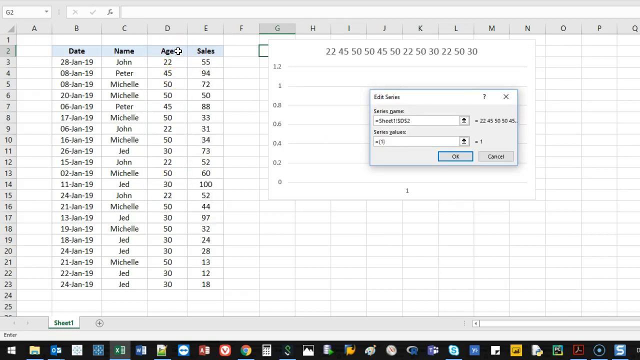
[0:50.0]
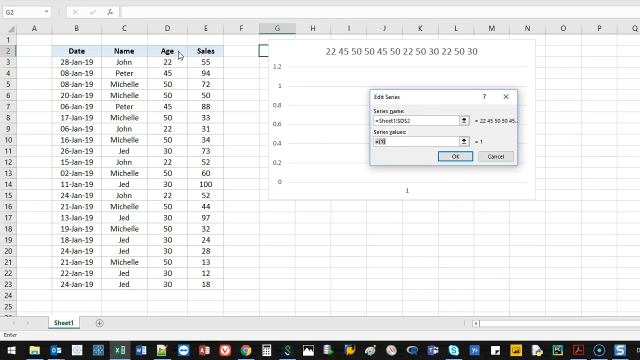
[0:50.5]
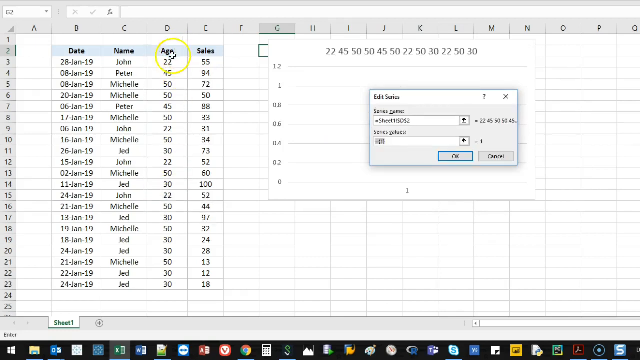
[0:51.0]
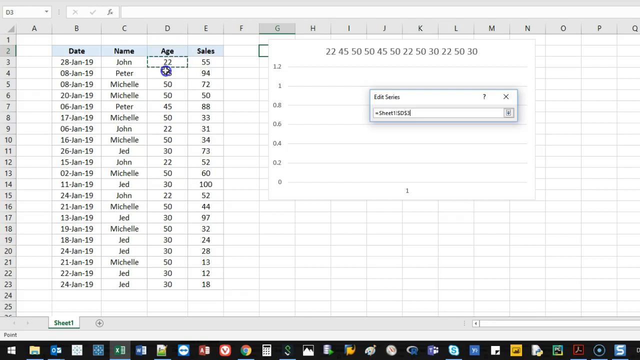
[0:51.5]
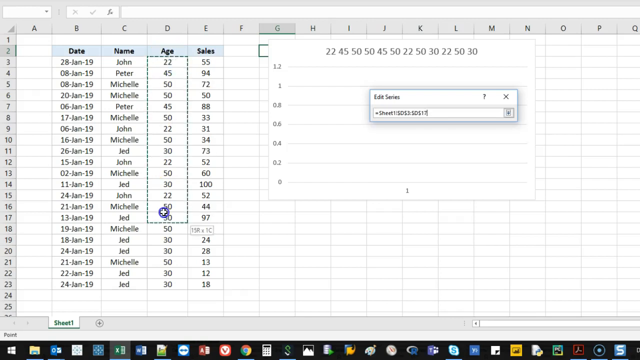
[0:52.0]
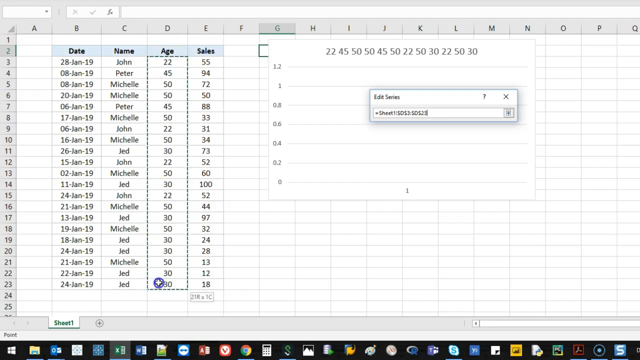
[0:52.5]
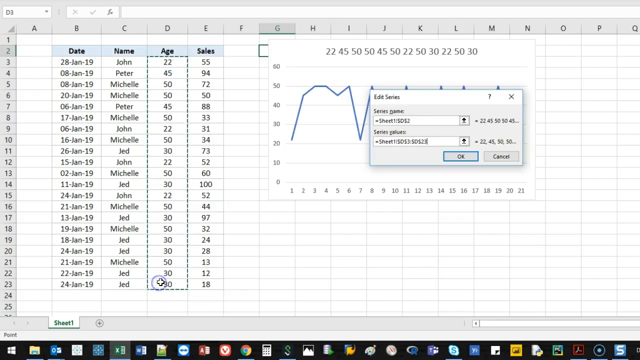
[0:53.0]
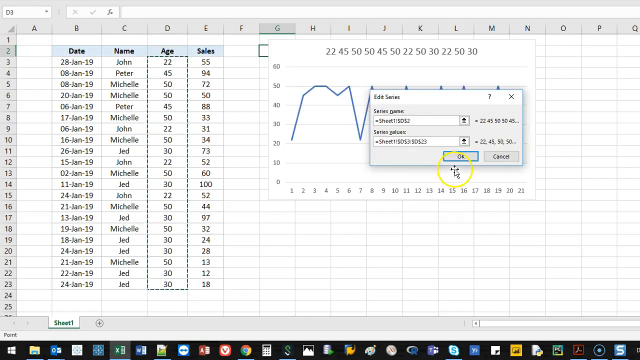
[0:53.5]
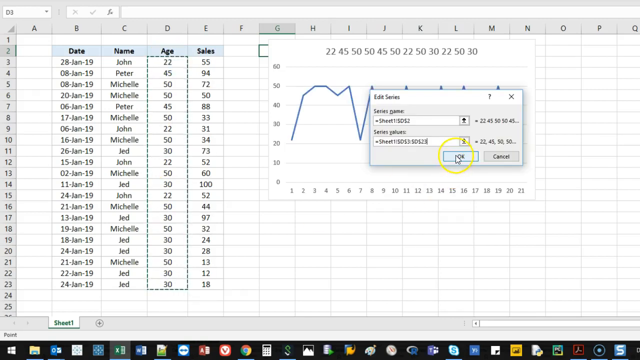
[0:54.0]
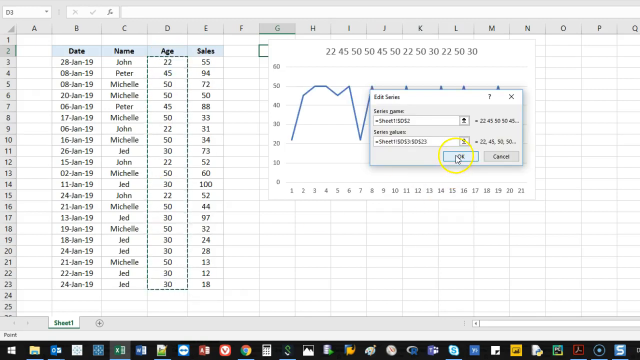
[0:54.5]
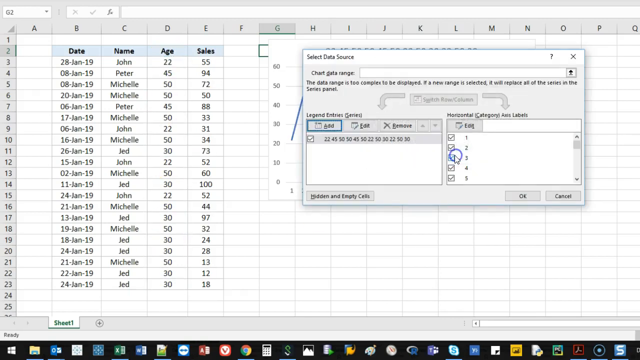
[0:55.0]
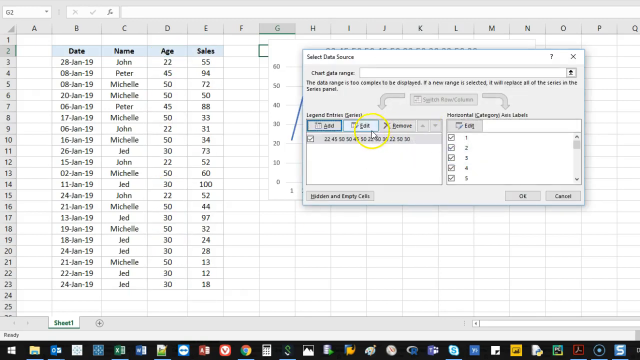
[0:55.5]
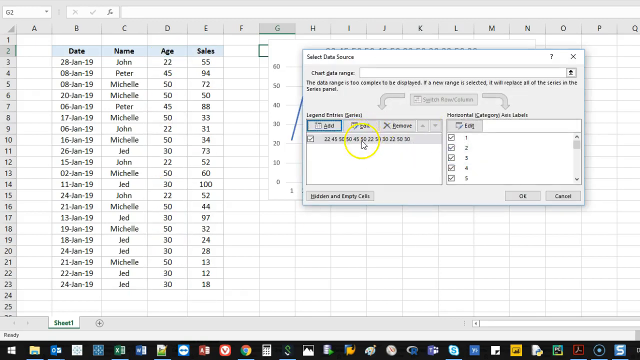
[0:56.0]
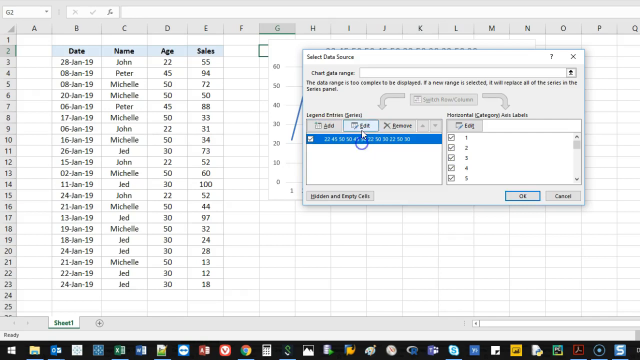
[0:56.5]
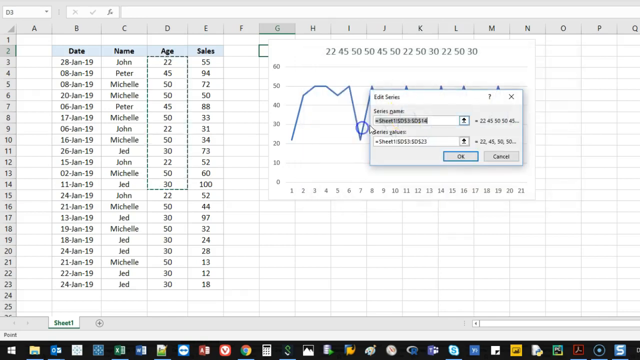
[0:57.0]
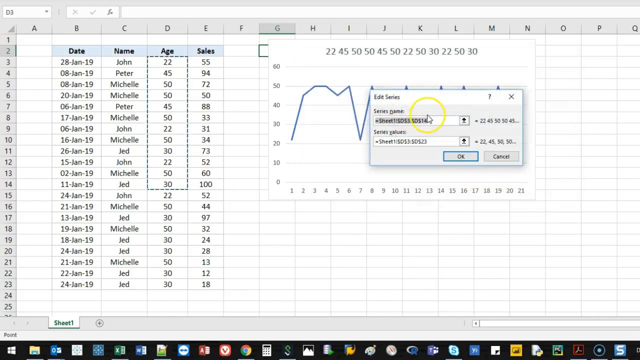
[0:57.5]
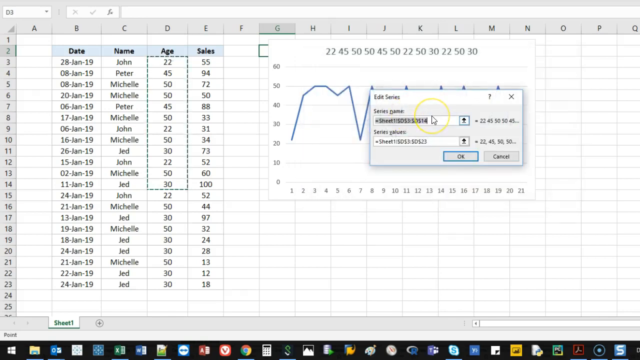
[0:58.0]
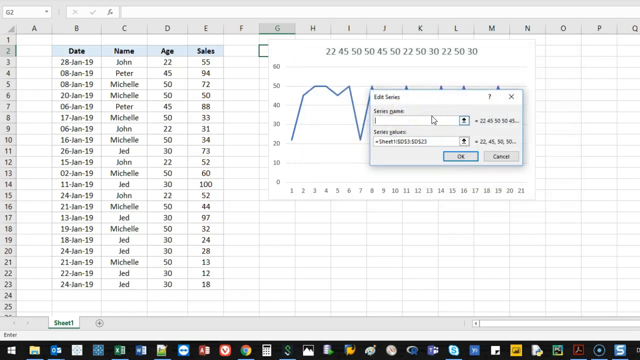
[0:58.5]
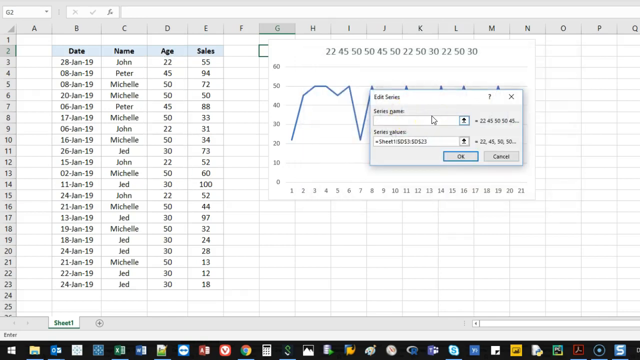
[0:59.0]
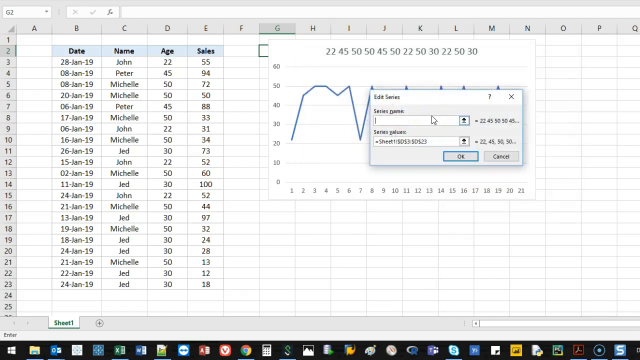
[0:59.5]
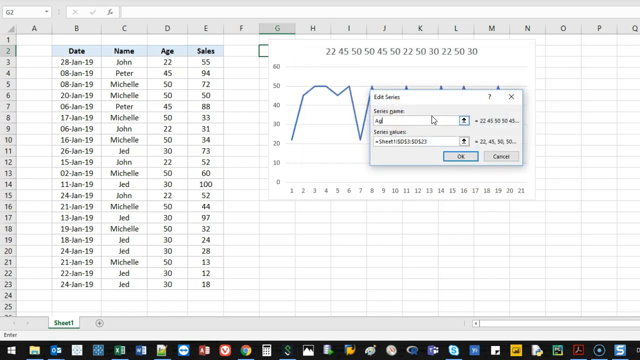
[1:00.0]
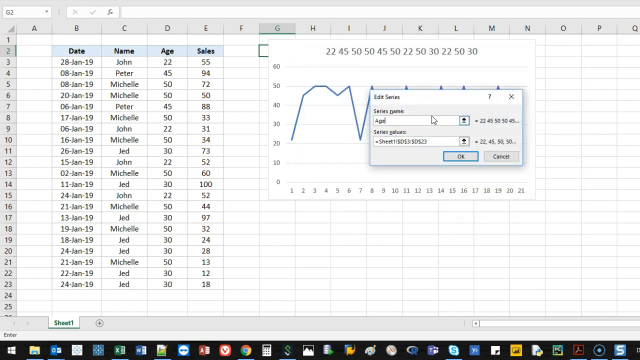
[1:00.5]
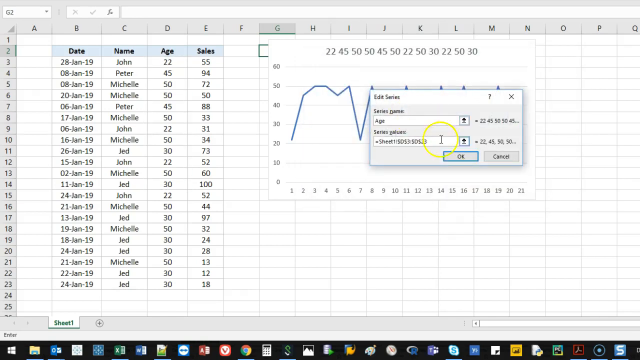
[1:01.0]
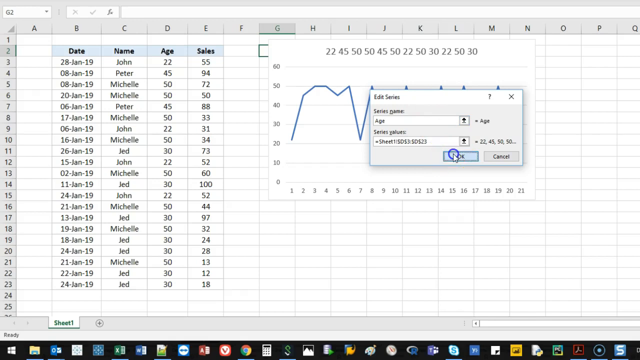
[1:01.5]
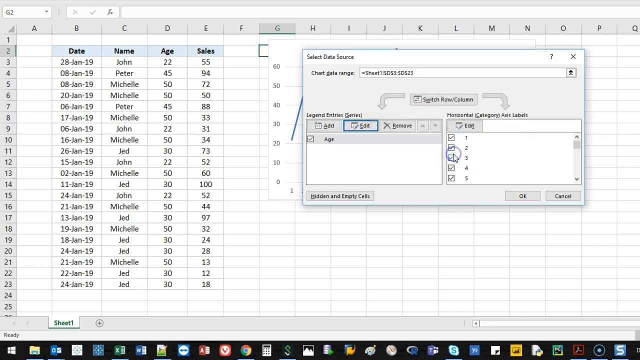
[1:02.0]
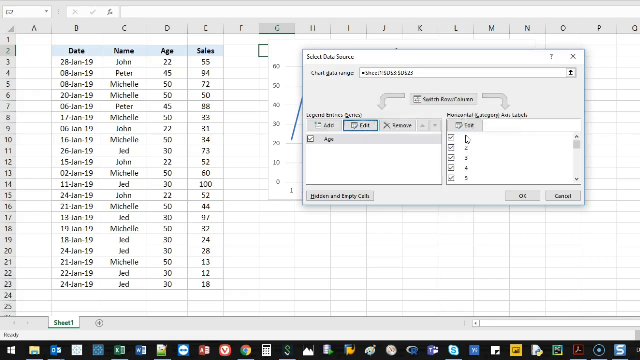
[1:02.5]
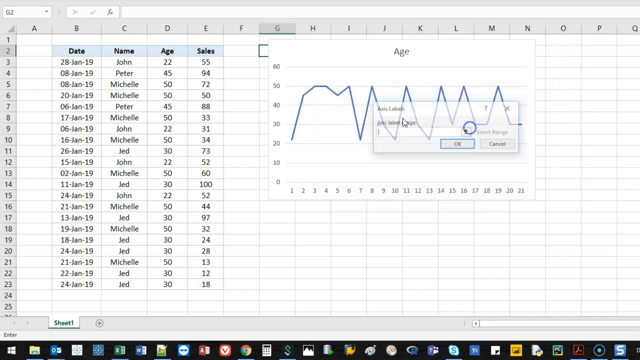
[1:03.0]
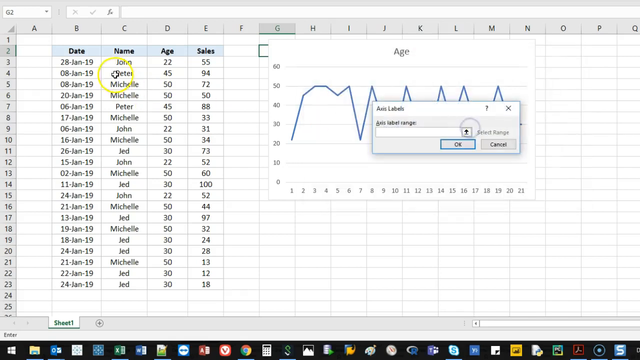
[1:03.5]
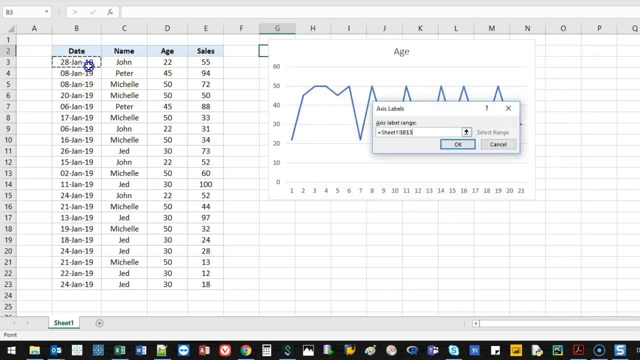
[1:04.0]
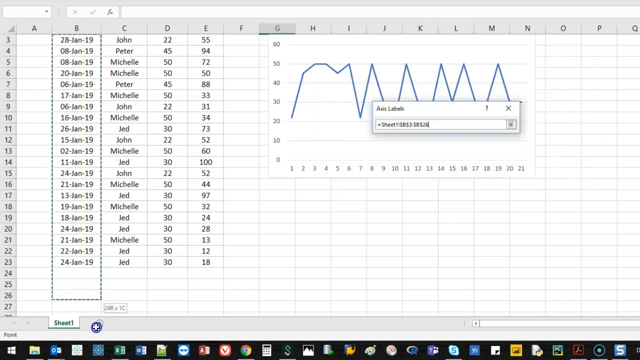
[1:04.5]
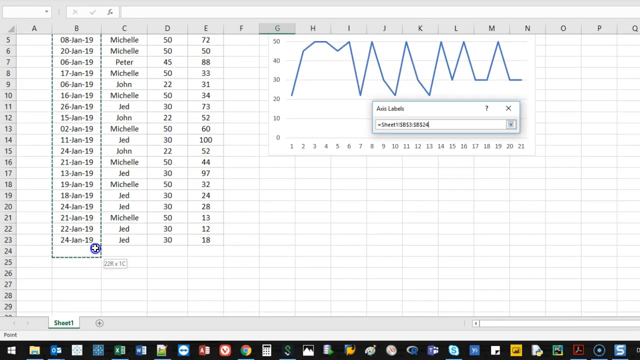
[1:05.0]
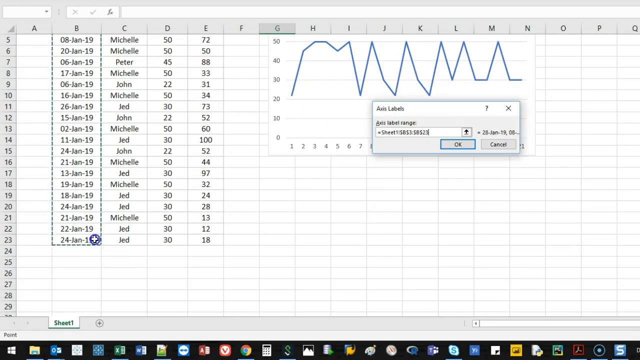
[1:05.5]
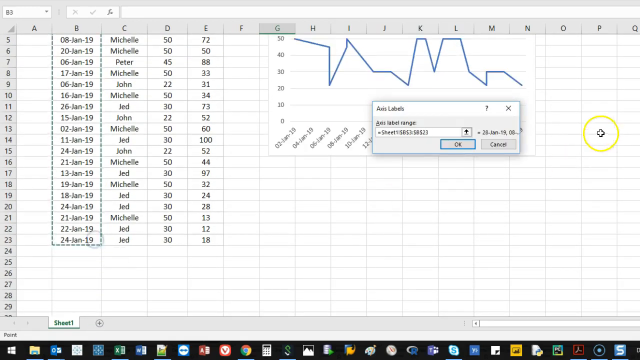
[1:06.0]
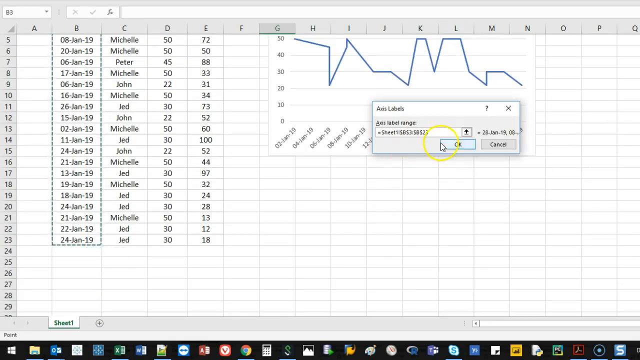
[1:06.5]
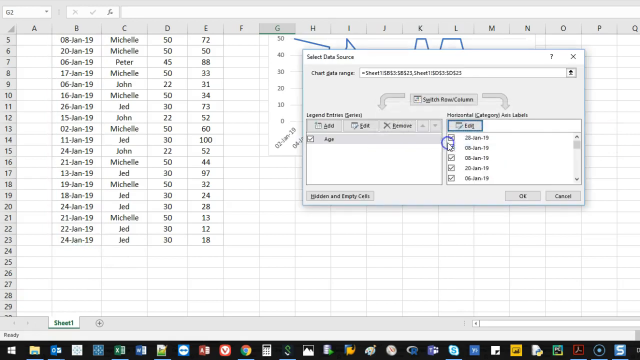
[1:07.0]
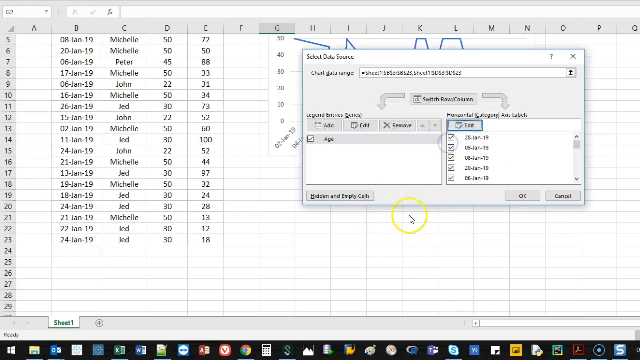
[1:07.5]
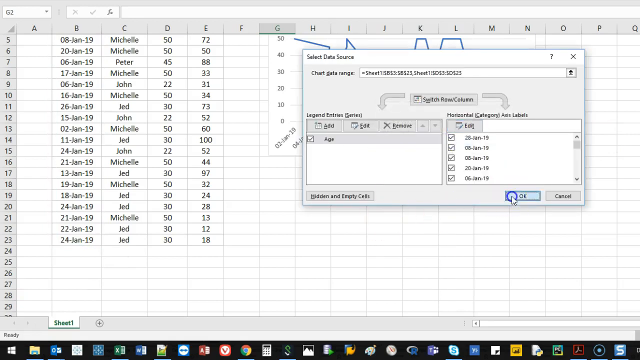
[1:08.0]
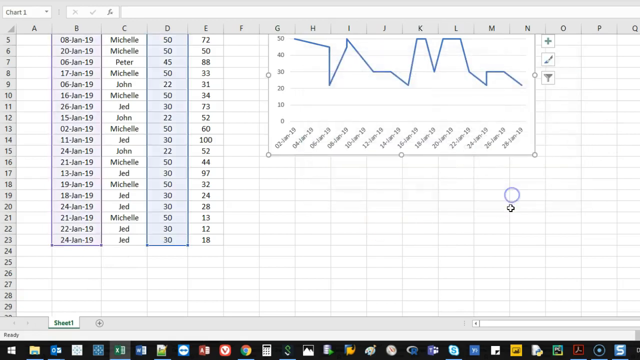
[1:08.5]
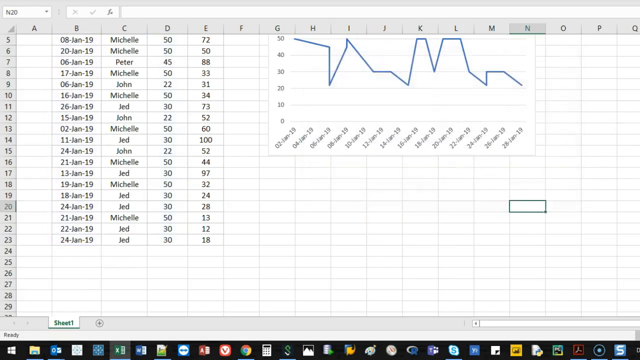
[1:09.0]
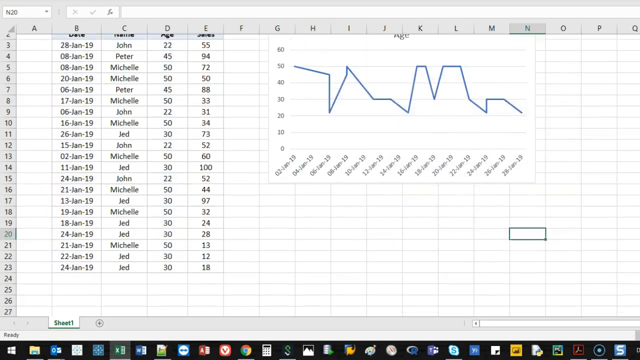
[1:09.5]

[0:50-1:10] A small Edit Series window is open with text inputs for series name and series value. The user highlights the cells from D3 down to D23, which changes the values in the Edit Series window, and selects OK. The Select Data Source window opens, and under the legend entries panel there is one entry listing all of the ages in the age column that were just selected. The user selects the checkbox next to the entry, then selects the entry so it is highlighted in blue, and clicks the edit button in the legend entries panel. This closes the Select Data Source window, and on the spreadsheet the cells between D3 and D14 are selected. In the Edit Series window the user deletes the series name, writes "age" and selects OK. The Select Data Source window opens, and in the horizontal category axis labels panel they click a button. A small rectangular window titled Axis Labels pops up with a text input box for Axis Label Range. The user selects all of the boxes between B3 and B23 in the first column, then hits OK in the Axis Labels window. Back on the spreadsheet, a line graph is overlaid on the right next to the columns on the left, and the user scrolls up to the top of the spreadsheet.